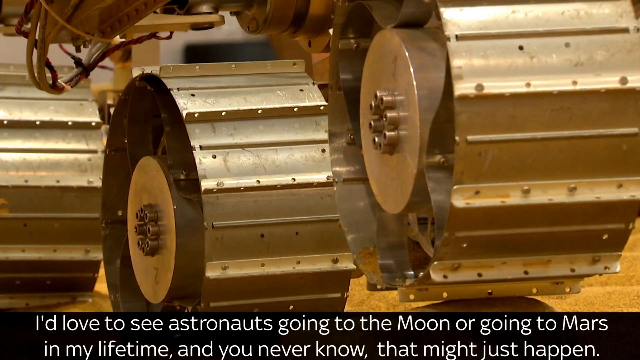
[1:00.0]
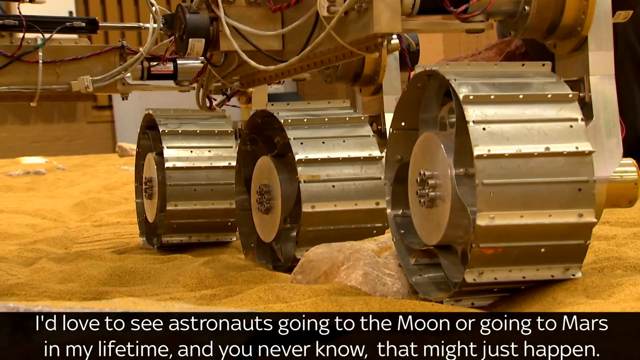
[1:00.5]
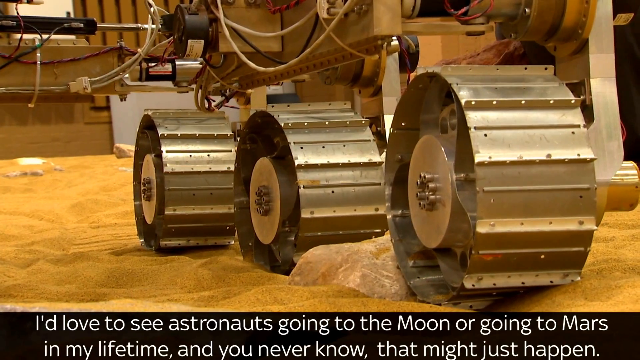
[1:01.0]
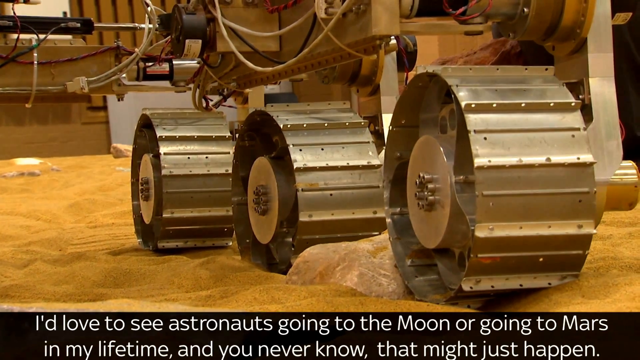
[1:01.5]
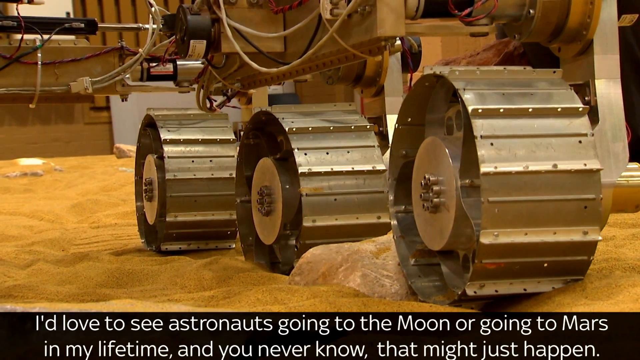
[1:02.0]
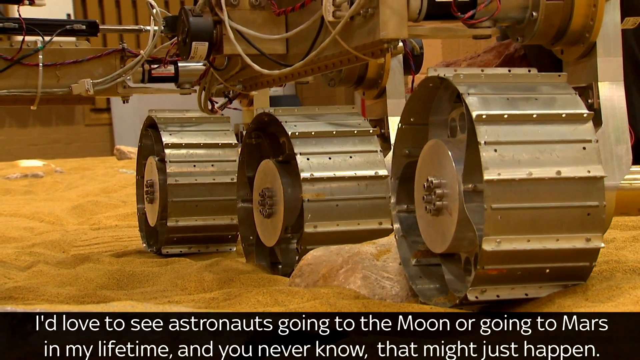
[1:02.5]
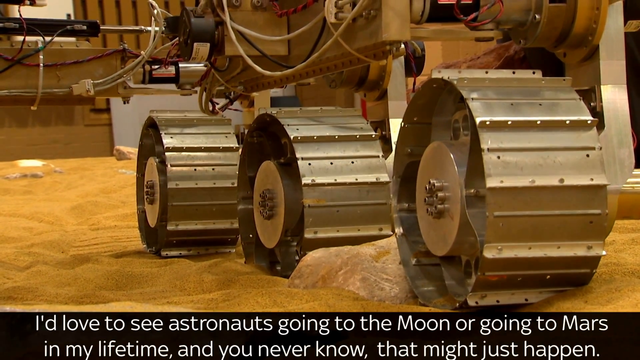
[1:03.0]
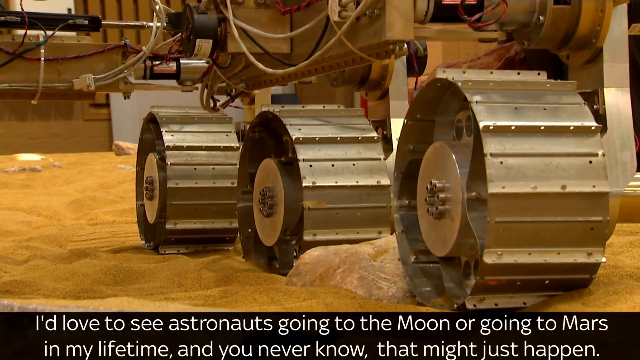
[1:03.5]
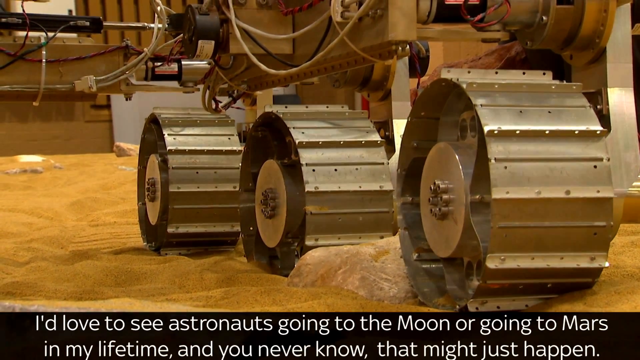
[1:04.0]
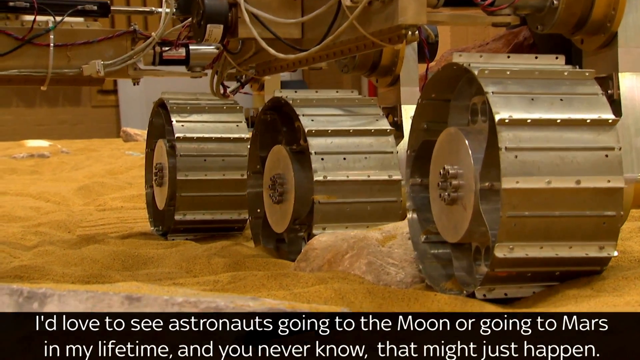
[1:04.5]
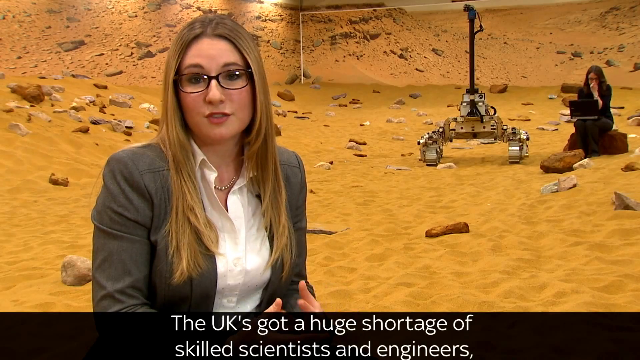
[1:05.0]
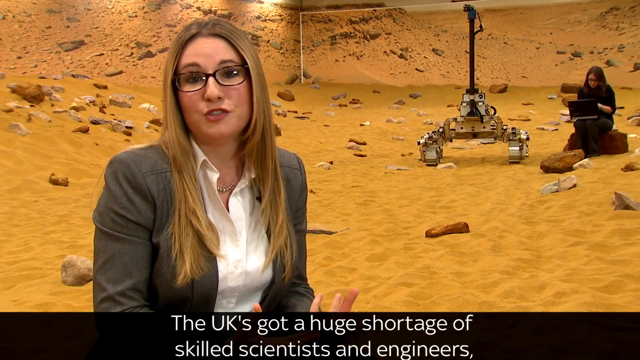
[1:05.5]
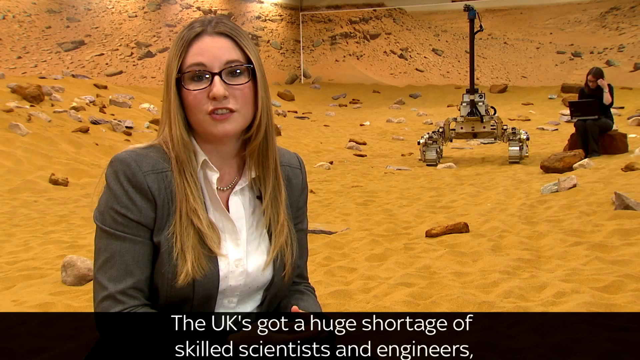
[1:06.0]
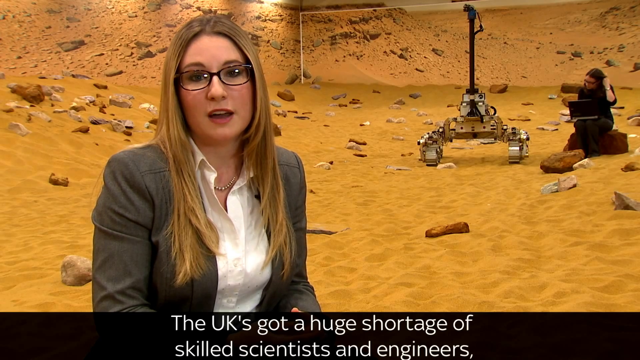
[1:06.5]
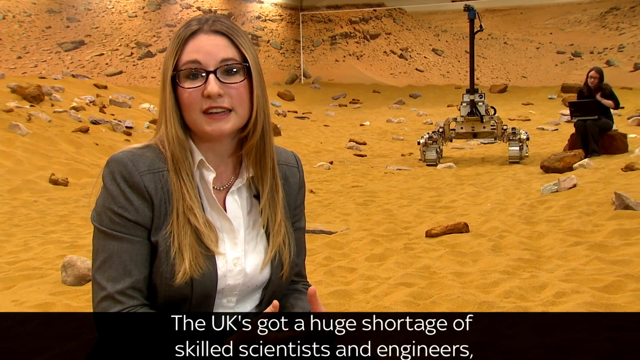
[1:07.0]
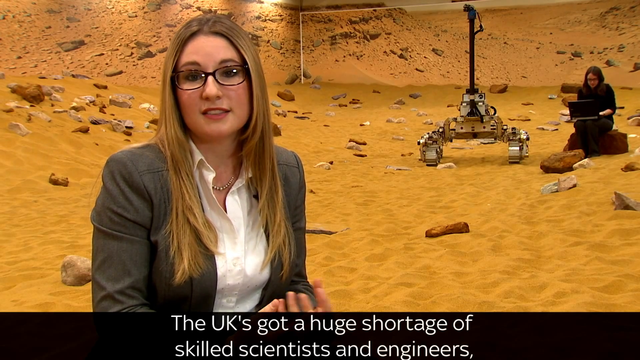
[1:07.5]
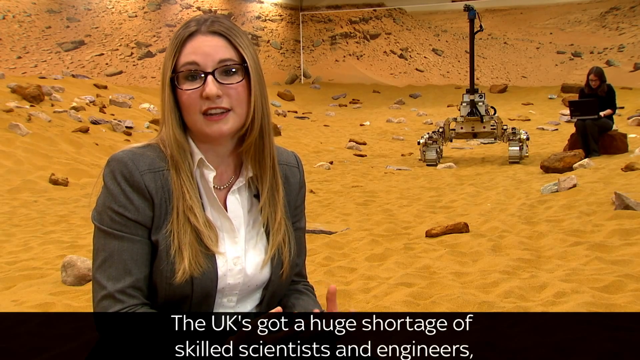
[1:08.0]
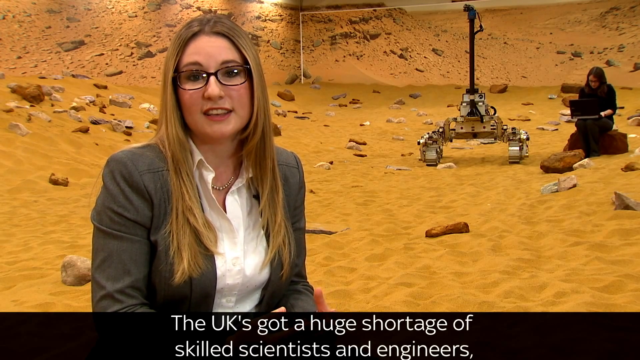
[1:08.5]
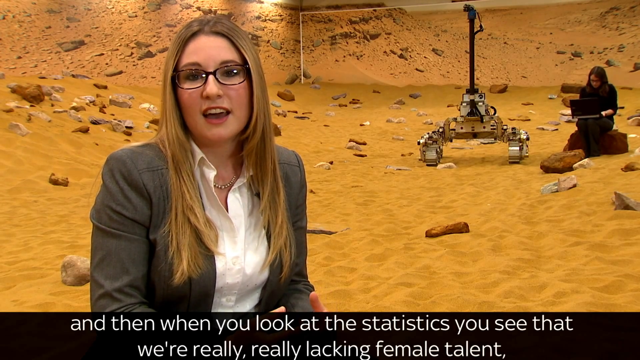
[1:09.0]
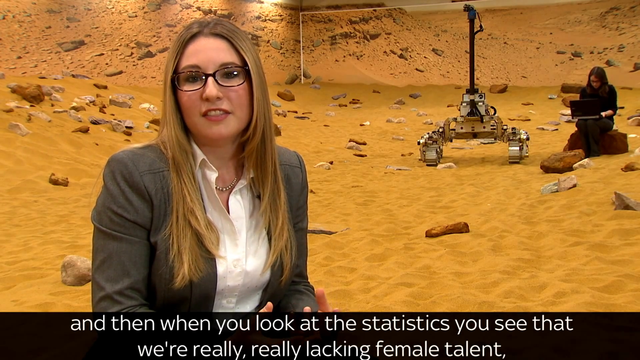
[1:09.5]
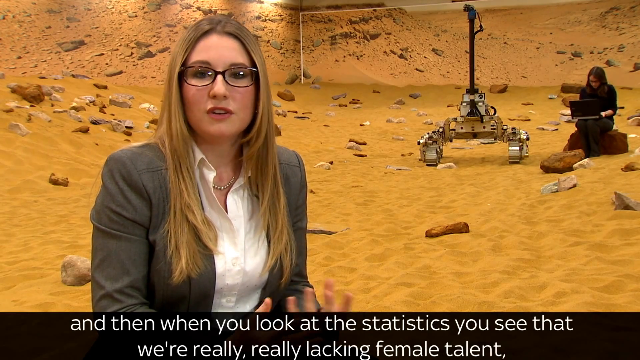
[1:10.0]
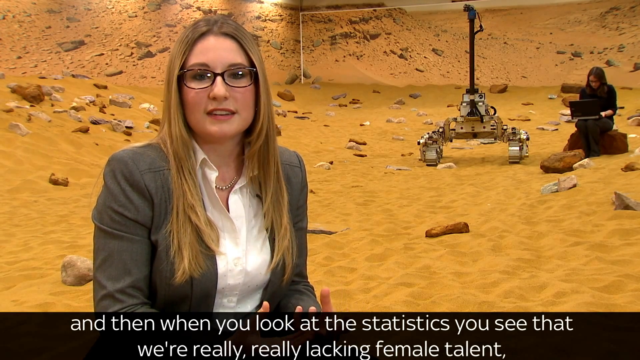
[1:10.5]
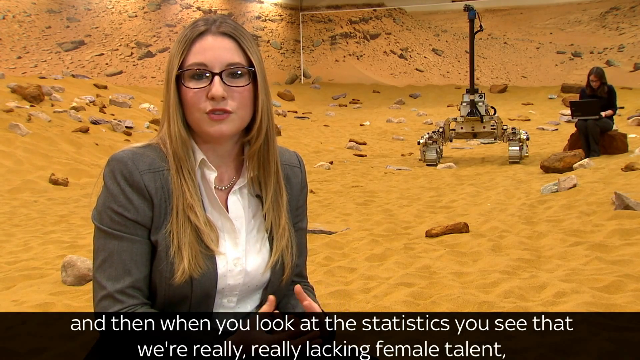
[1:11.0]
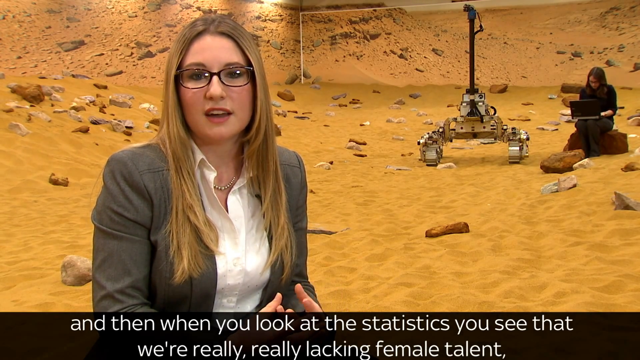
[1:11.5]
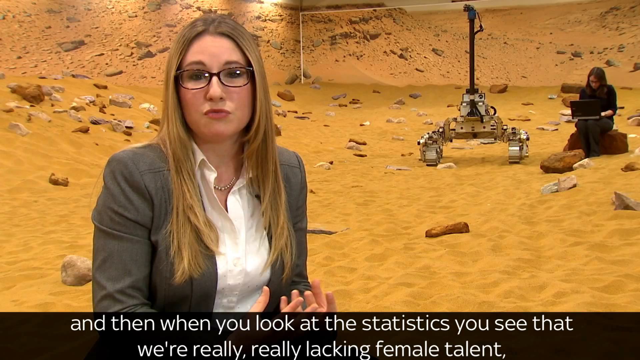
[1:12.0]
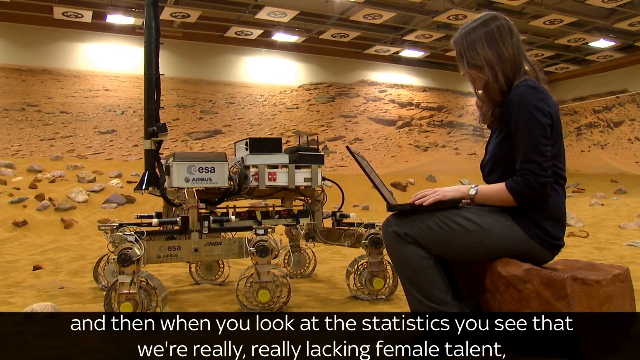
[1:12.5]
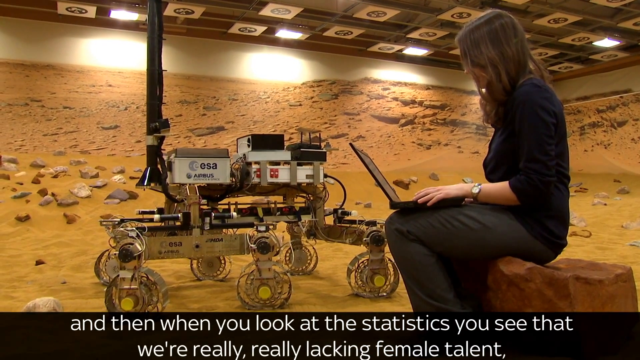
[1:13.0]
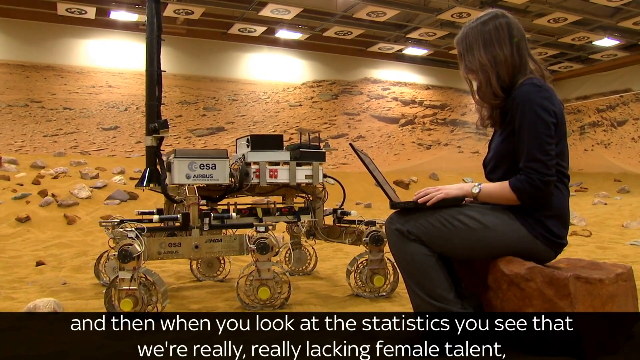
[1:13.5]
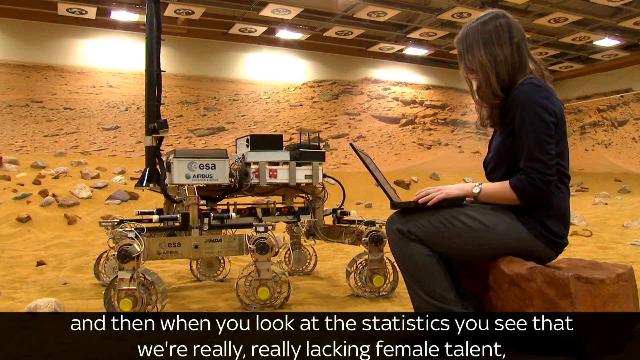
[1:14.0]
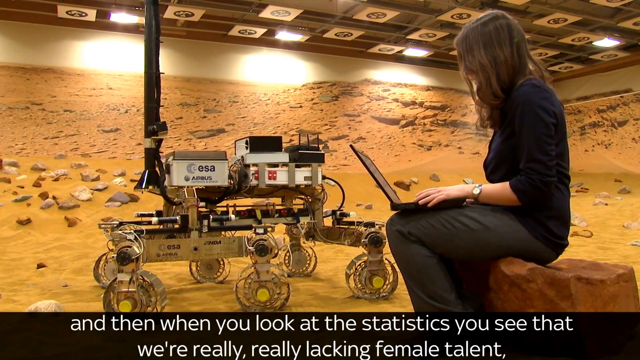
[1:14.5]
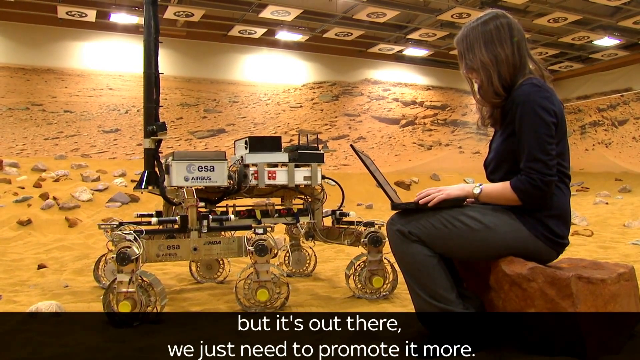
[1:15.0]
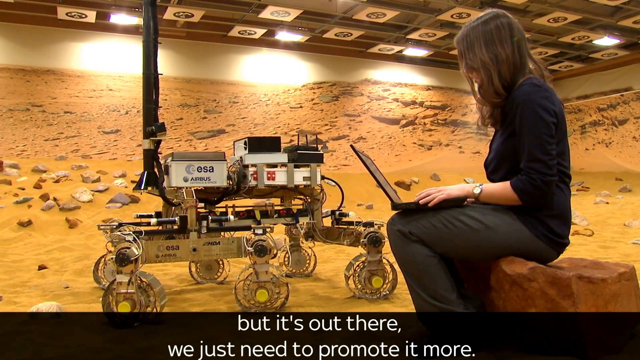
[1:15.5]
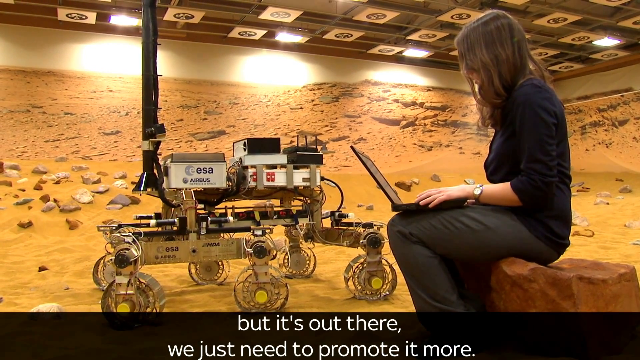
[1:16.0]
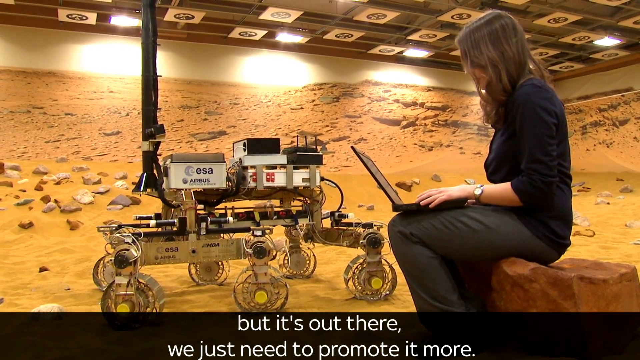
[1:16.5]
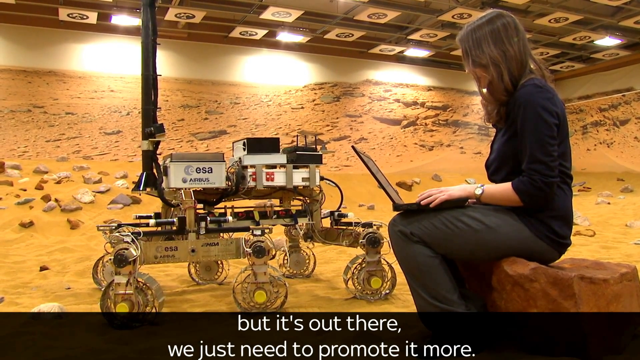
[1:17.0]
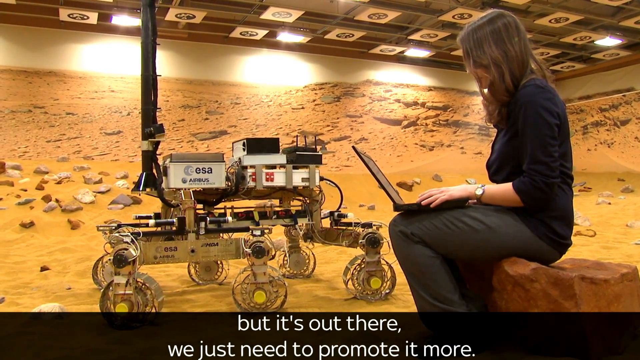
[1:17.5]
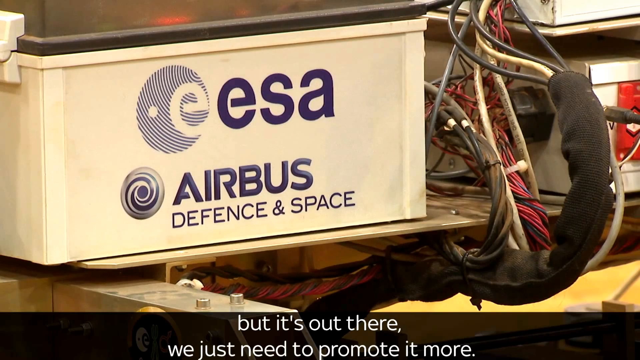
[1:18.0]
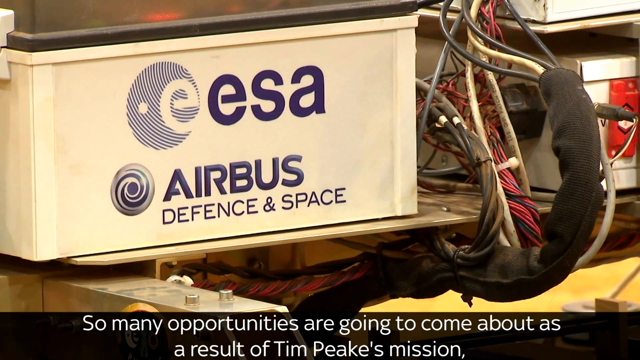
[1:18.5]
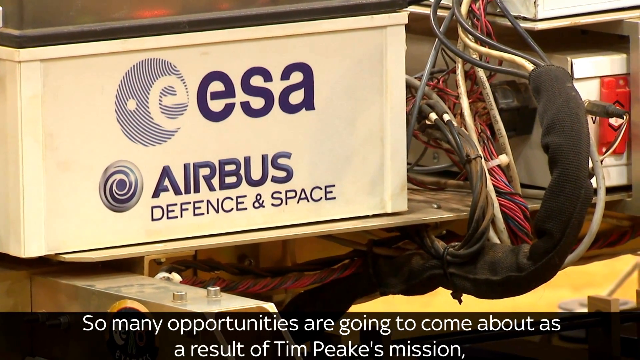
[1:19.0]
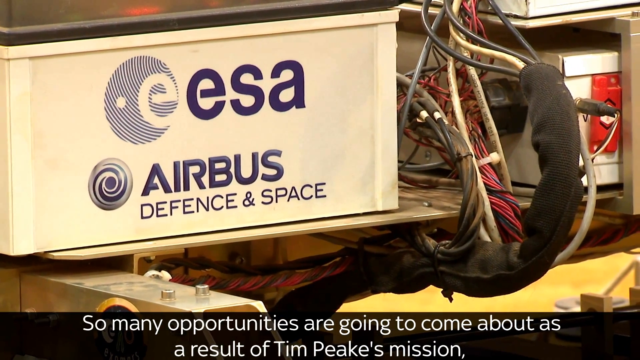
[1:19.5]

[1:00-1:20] The metal wheels continue moving clockwise at a very slow pace. The camera moves a little left, right, up and down, almost as if a person is holding it and not keeping it entirely still. The video returns to the woman on the left speaking into the camera, with the other woman still visible on the right in the background on her laptop. Then comes a close-up, side view of the woman on the laptop. She sits on a brown rock, wearing a dark black sweatshirt and what look like dark green or gray pants, with a black laptop open on her lap and her hands placed where the keyboard normally is. To her left is an electronic metal device, and the video goes into a close-up of this device, showing wires and different metal parts.